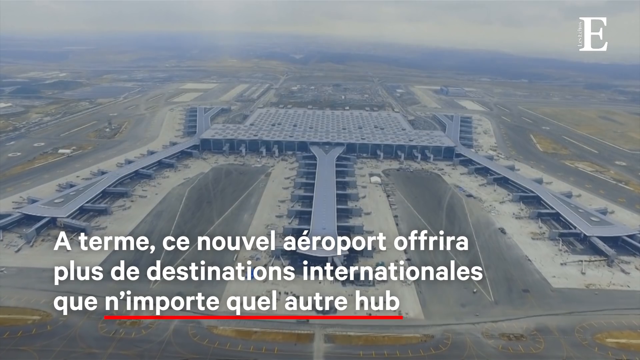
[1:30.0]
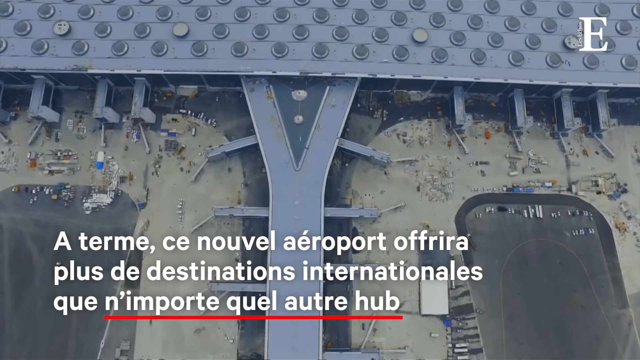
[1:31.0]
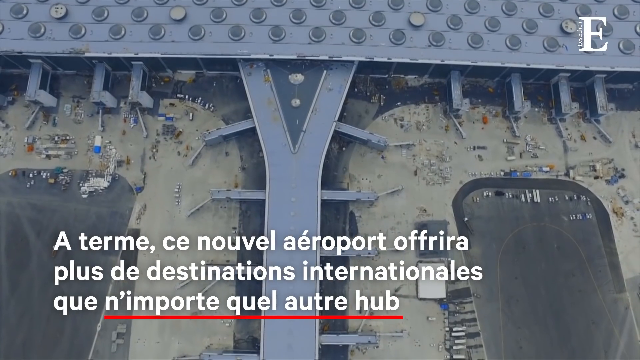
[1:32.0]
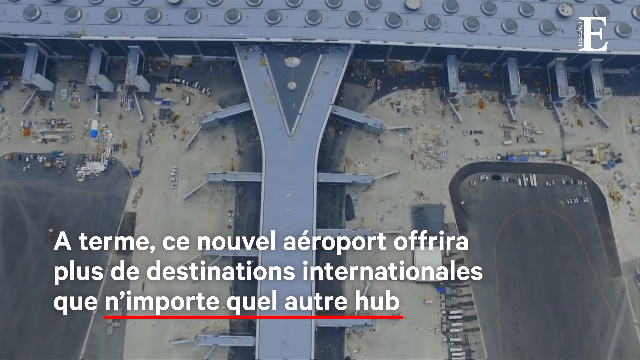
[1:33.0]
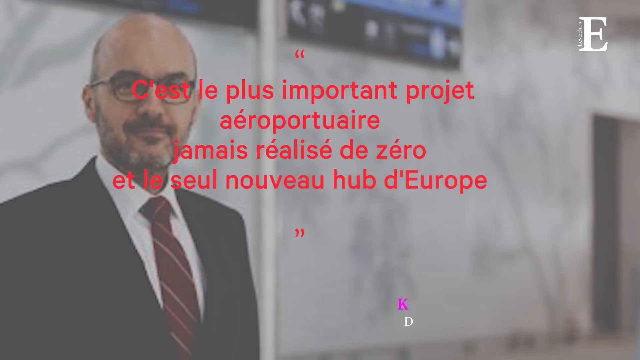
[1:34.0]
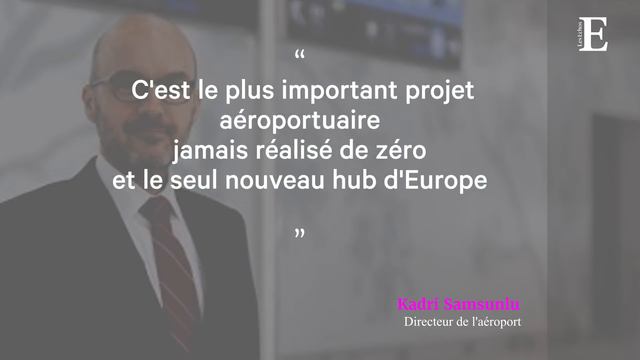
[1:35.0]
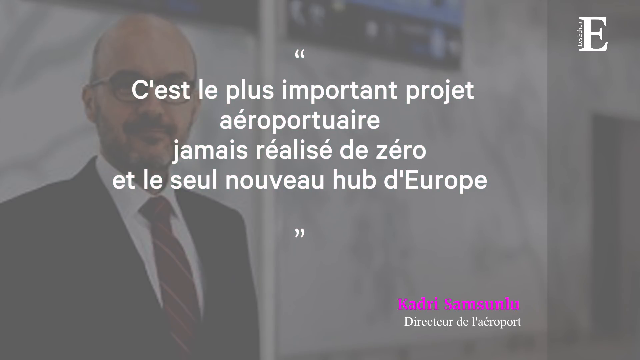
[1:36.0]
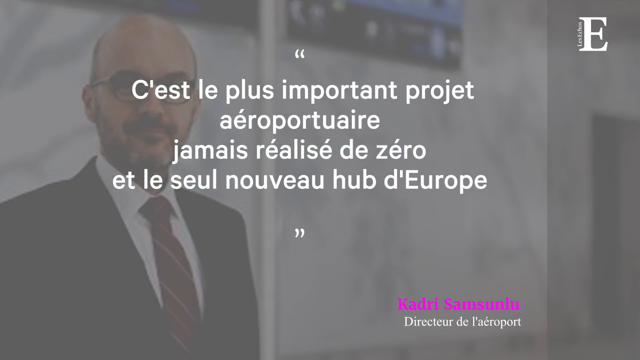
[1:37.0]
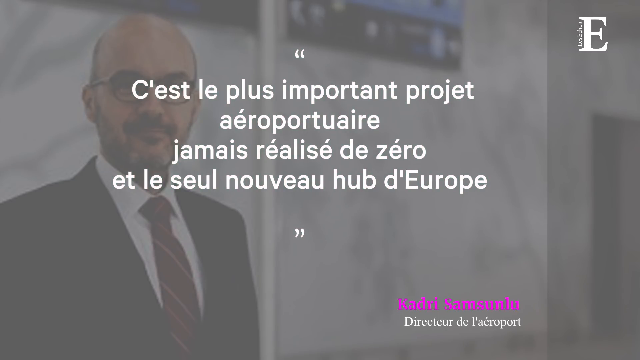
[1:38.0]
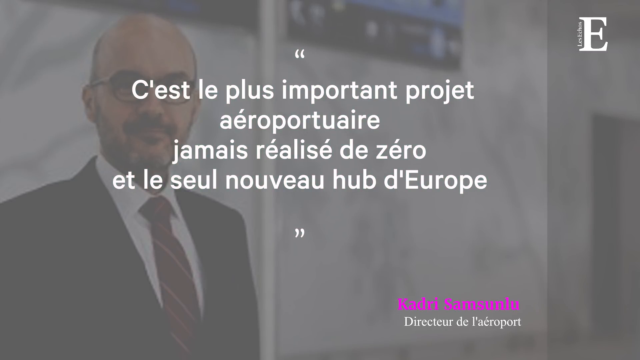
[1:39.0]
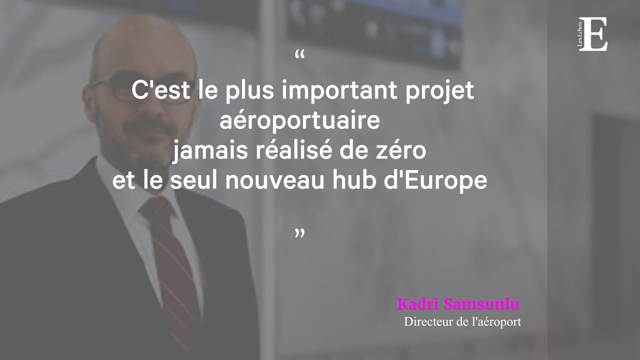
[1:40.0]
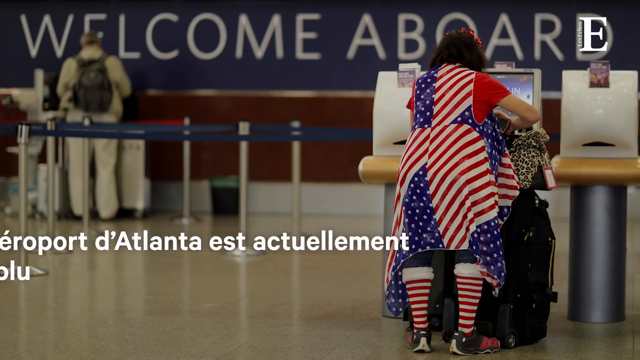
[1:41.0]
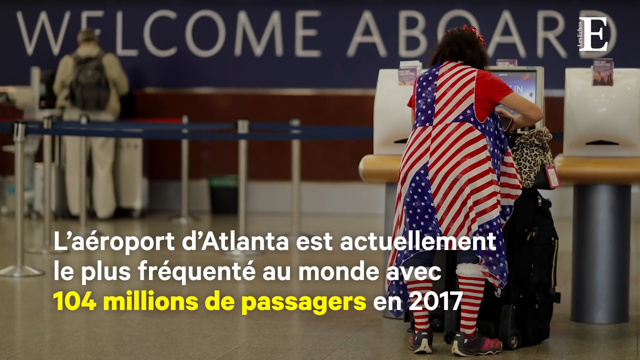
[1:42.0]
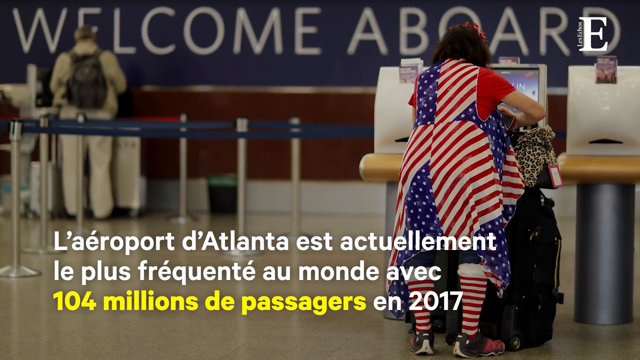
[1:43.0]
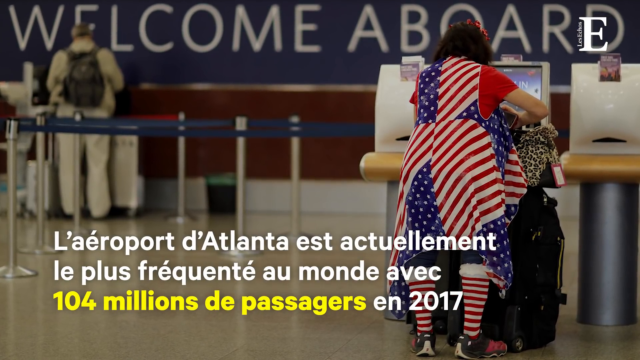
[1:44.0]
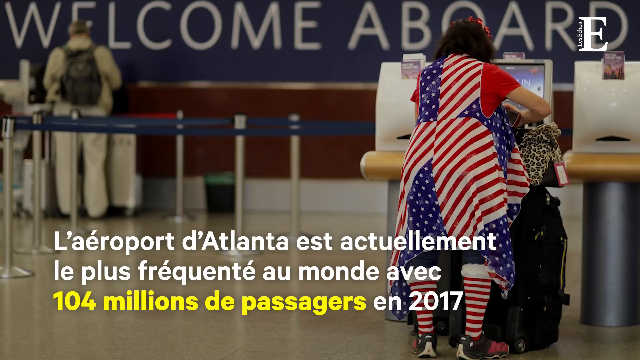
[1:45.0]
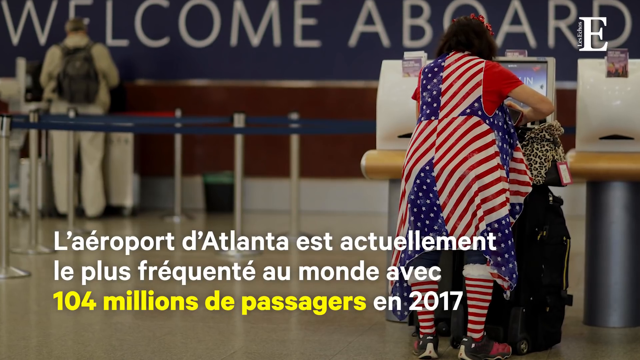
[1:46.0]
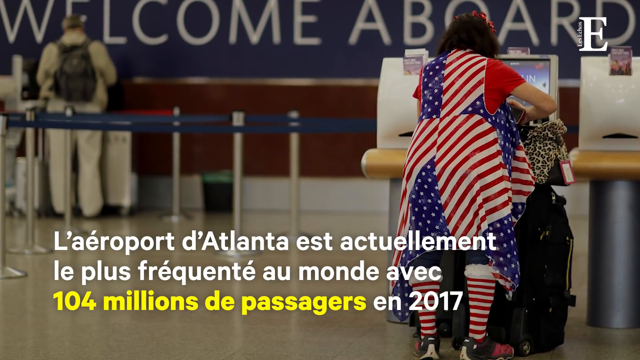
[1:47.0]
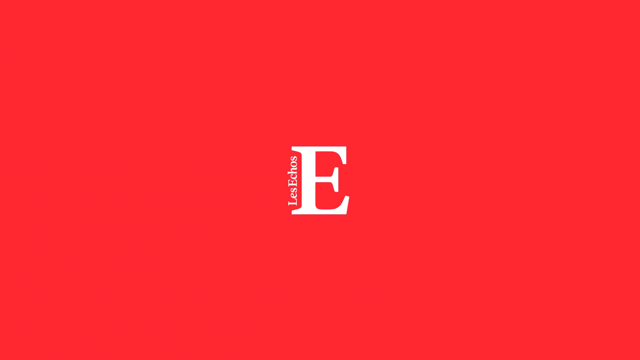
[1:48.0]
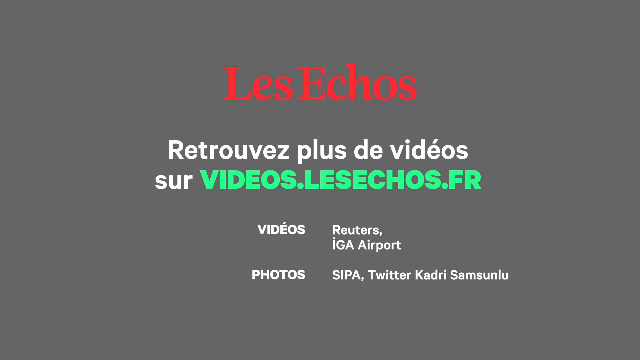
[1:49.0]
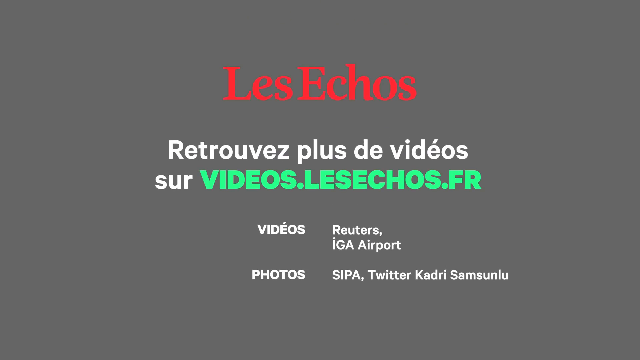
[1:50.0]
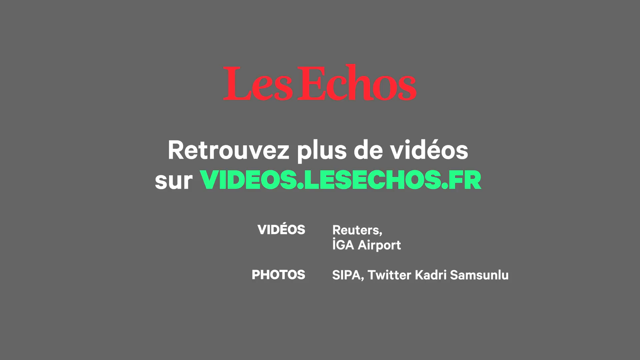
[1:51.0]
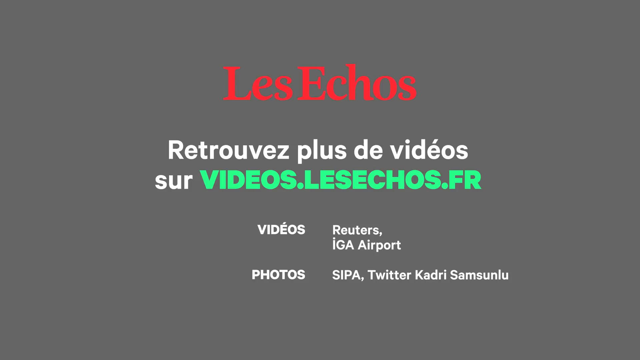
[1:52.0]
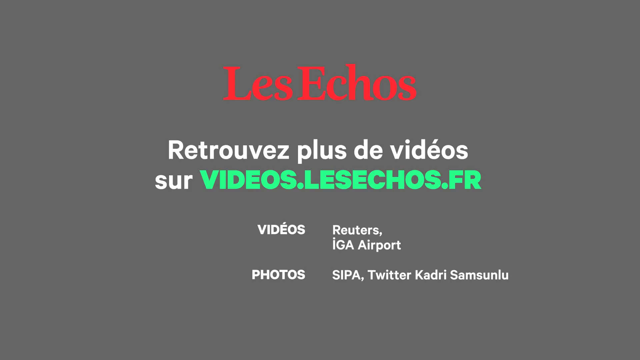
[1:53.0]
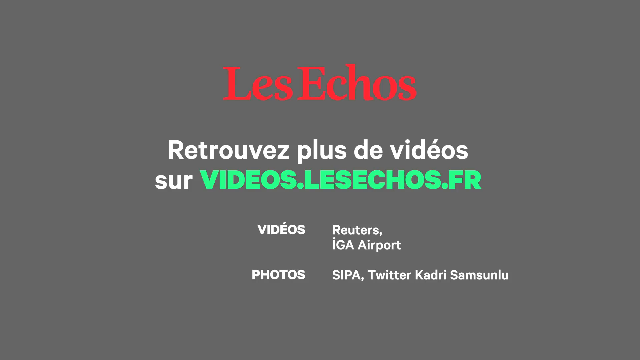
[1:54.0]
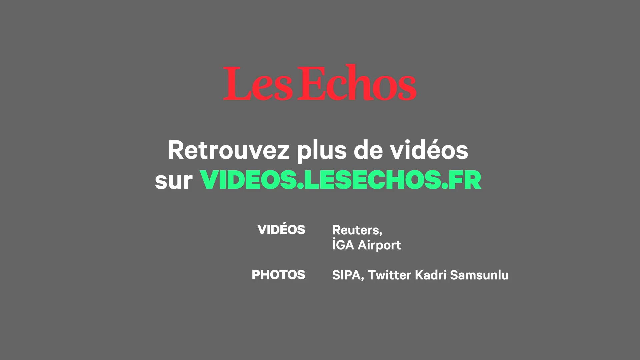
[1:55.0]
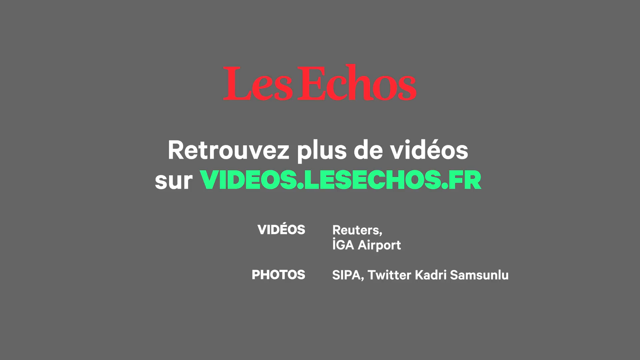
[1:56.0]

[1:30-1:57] A man appears on the left side of the screen as a still figure, with words in French superimposed over him and his name below. He is in an airport, and an arrivals and departures sign is possibly visible on the wall behind him. The text over him appears to be a quote from him, something about a new hub in Europe. Next, a woman appears in what looks like an American flag outfit; she looks almost like a clown. The video then ends with "Les Echos" in red and the credits for the photographer. A white "E" is in the upper right corner throughout the video.